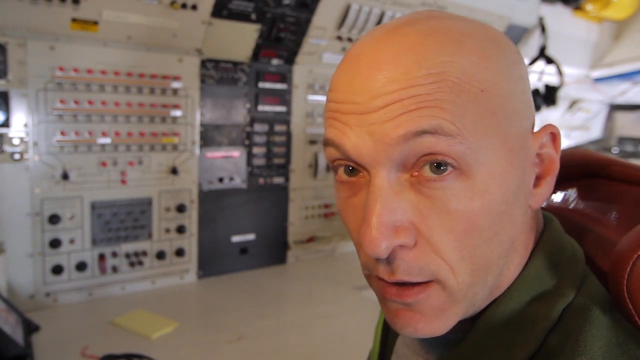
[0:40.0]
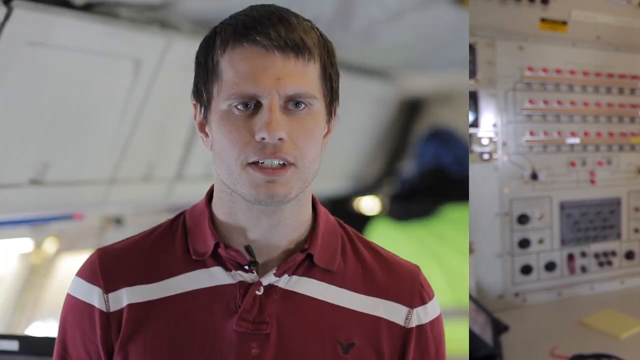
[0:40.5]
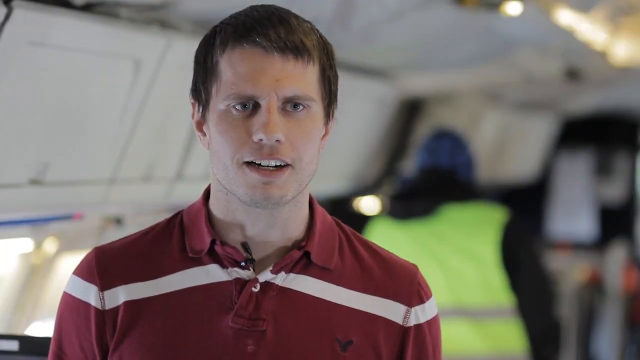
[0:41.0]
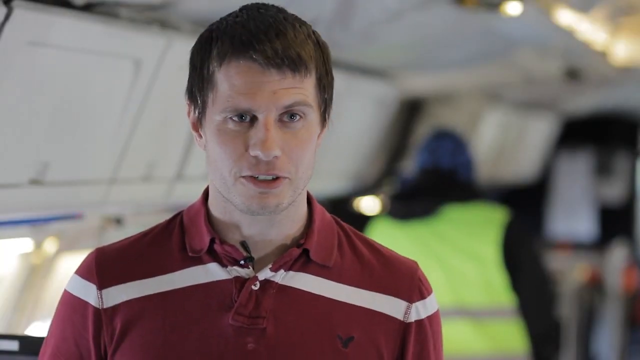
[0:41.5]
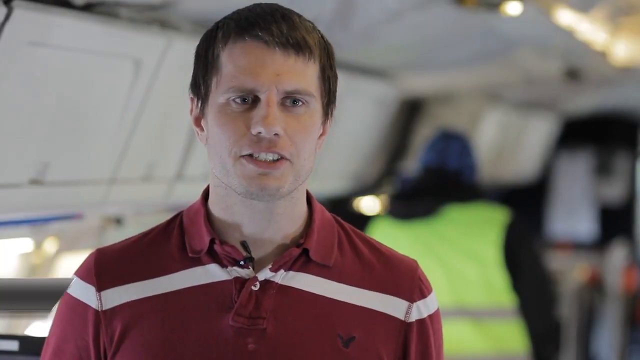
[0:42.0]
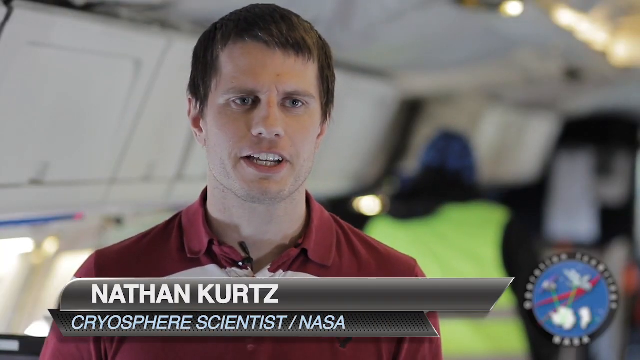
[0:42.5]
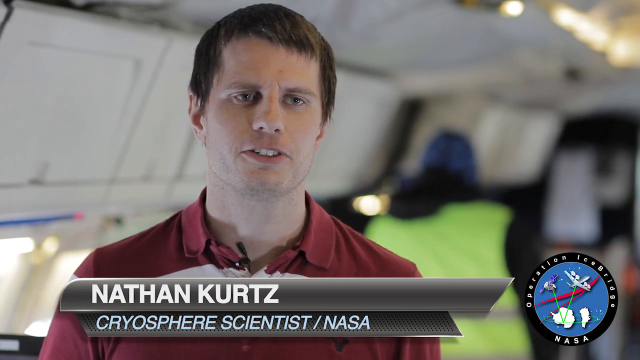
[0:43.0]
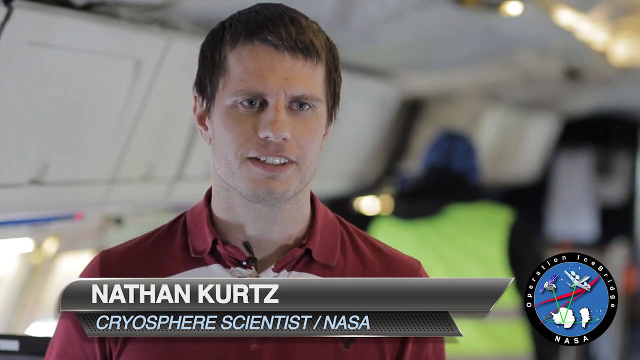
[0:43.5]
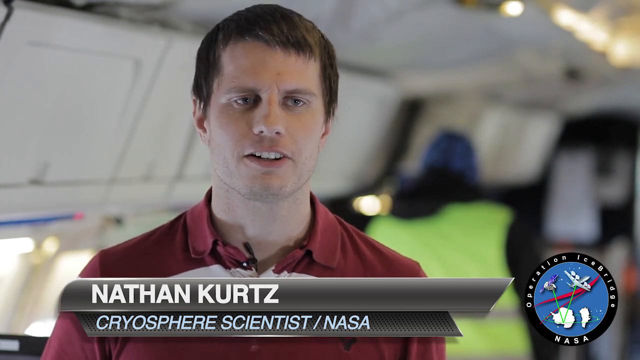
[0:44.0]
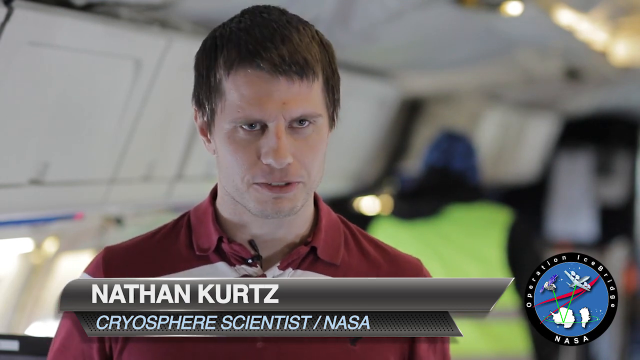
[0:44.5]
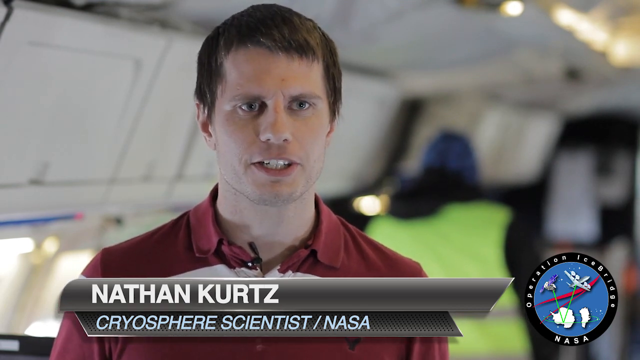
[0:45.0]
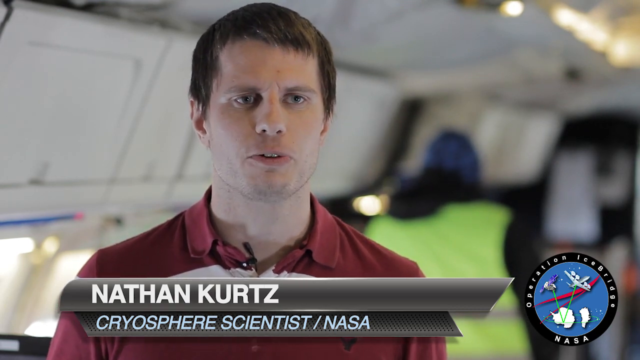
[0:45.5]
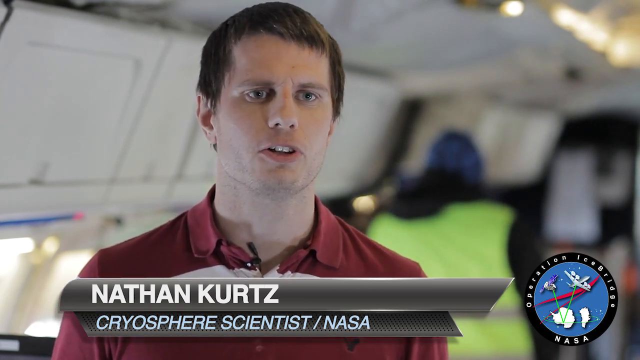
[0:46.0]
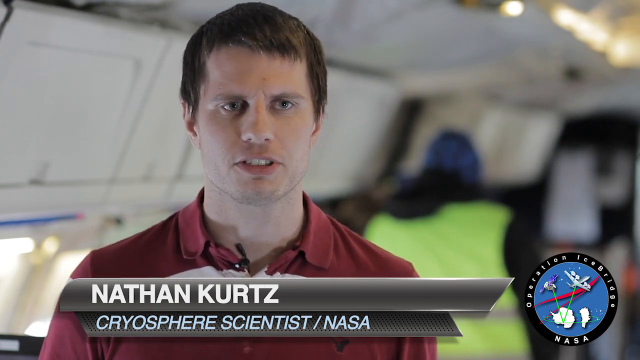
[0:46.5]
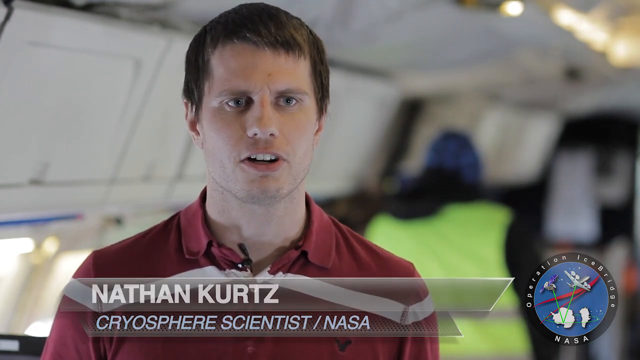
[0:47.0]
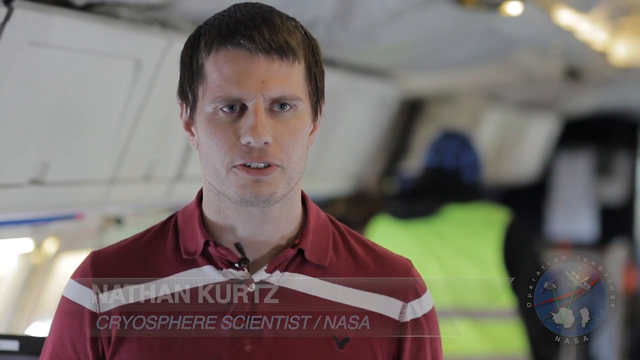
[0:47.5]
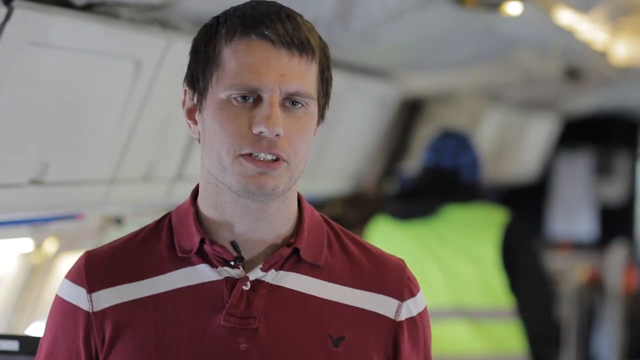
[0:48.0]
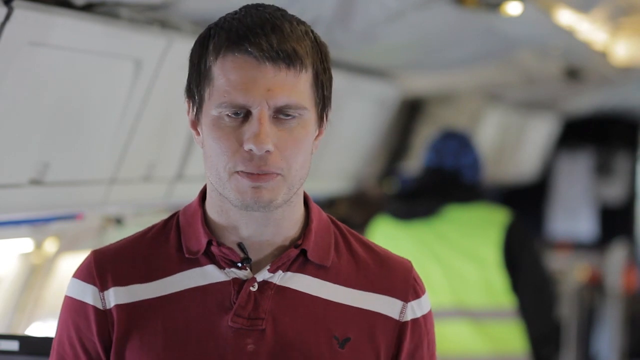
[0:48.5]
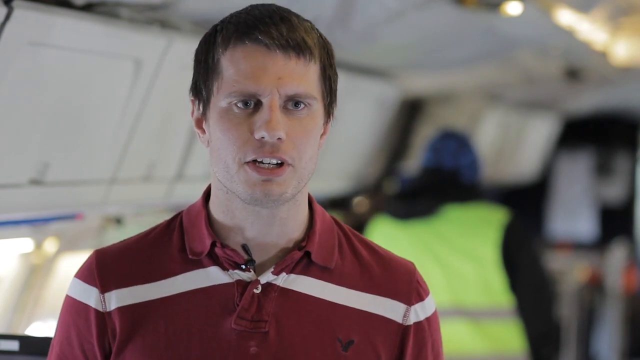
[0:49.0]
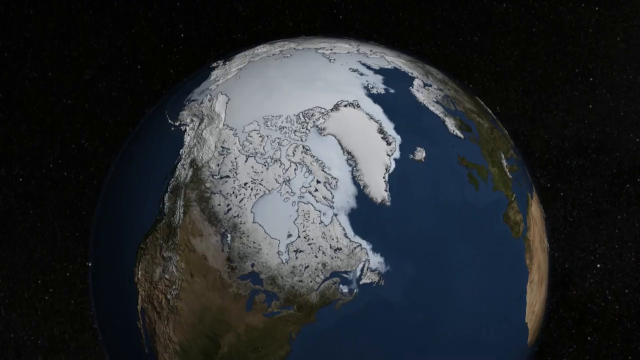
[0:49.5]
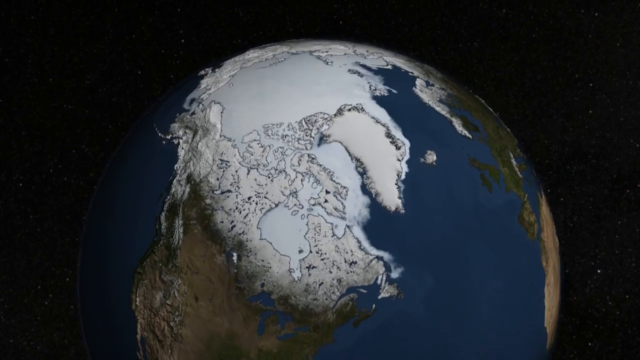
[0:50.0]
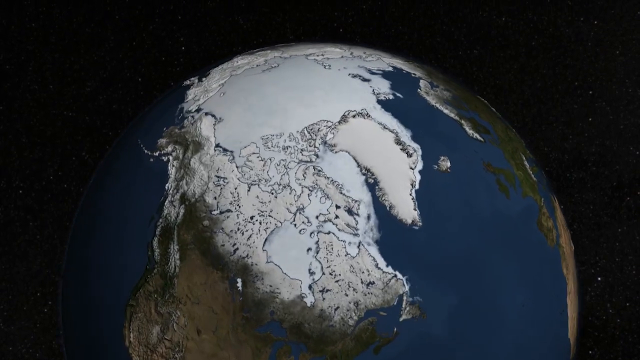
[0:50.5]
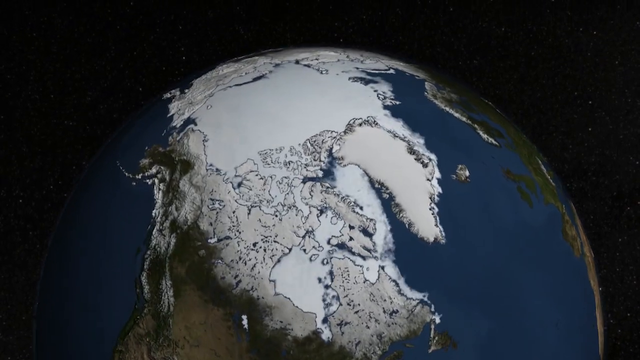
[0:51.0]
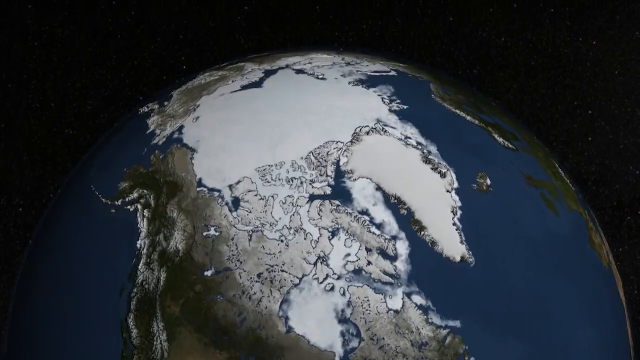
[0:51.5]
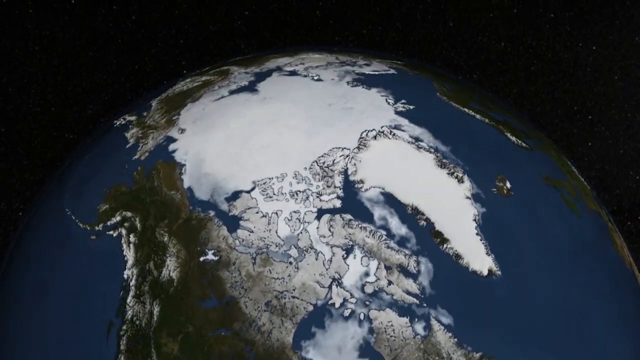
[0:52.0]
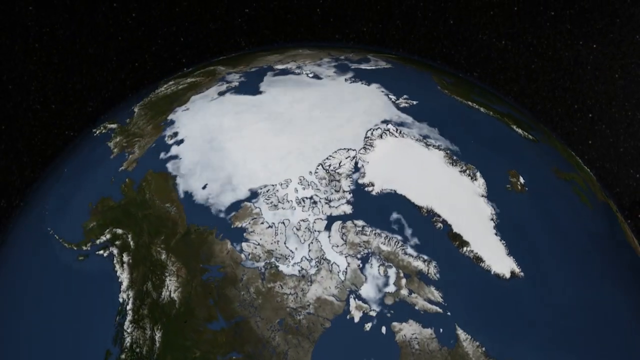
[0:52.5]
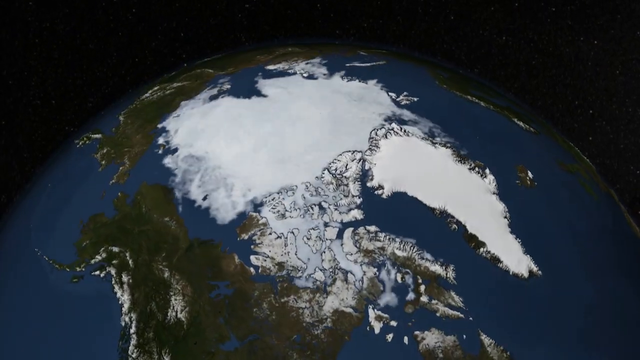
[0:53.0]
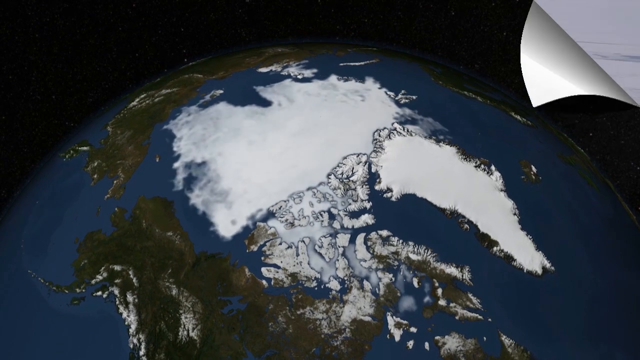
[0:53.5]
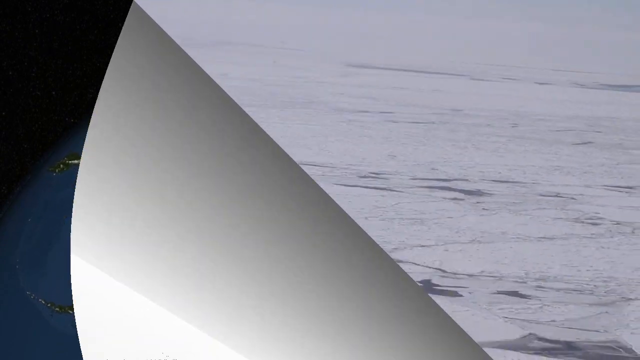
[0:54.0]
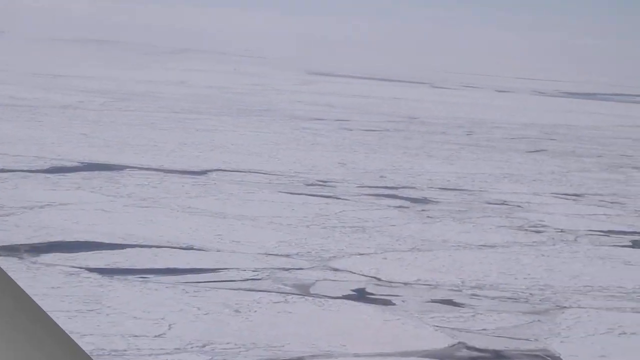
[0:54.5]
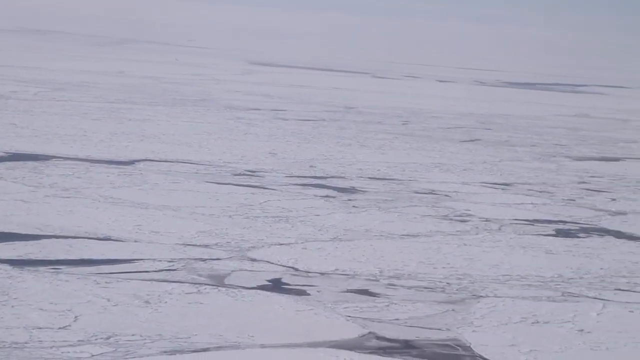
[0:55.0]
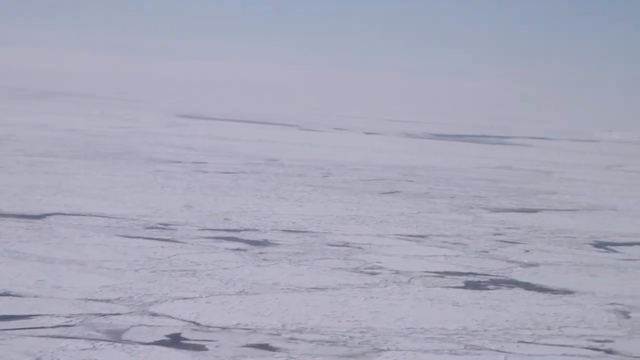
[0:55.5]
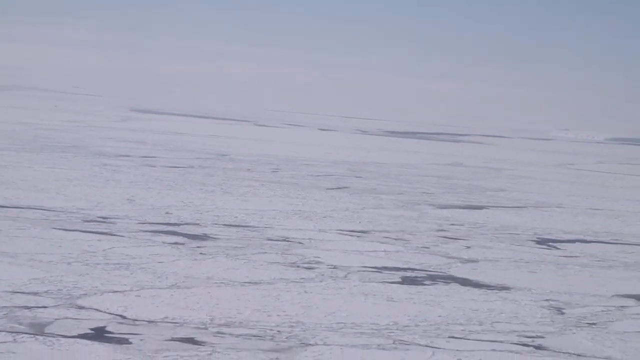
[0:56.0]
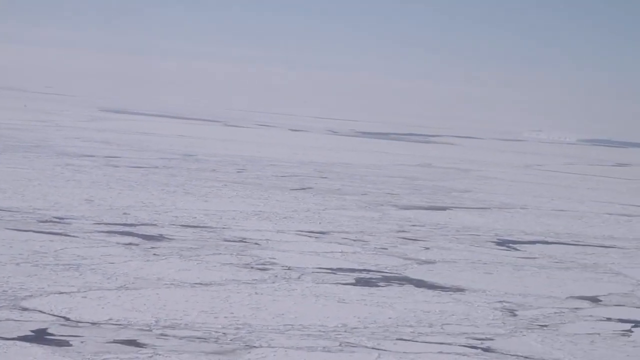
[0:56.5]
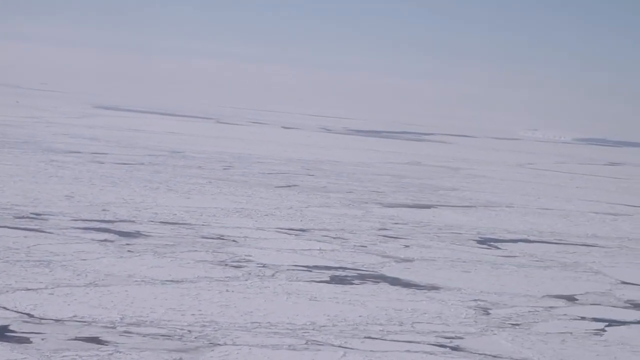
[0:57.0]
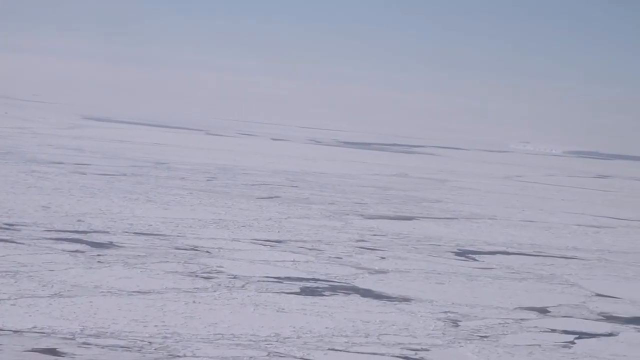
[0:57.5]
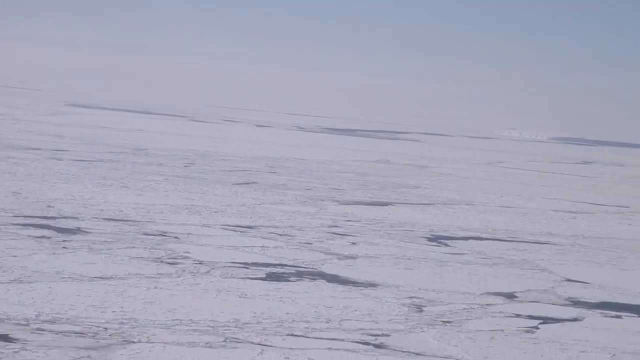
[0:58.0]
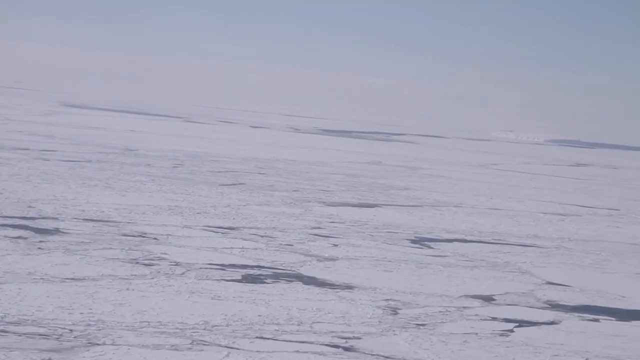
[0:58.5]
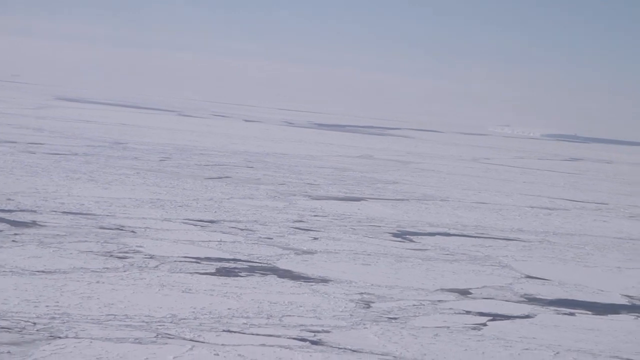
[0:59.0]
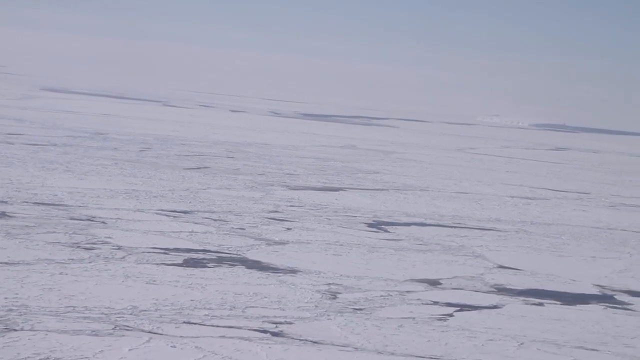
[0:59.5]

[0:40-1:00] A bald Caucasian man in a green jacket talks inside some type of aircraft and looks at some panels. Another Caucasian man in a red shirt talks, with a small microphone on his collar. On-screen text reads "Nathan Kurtz", identifying him as a cryospheric scientist for NASA. A global picture of the Earth shows the area near the North Pole where there is a lot of ice, and shows the ice melting. An aerial view then shows a lot of ice, apparently showing where it is melting.